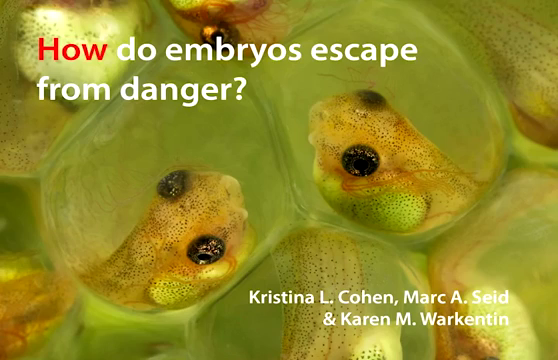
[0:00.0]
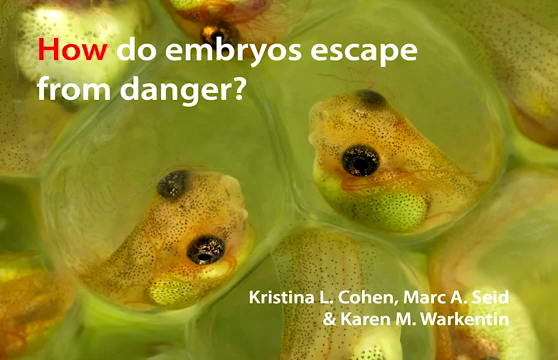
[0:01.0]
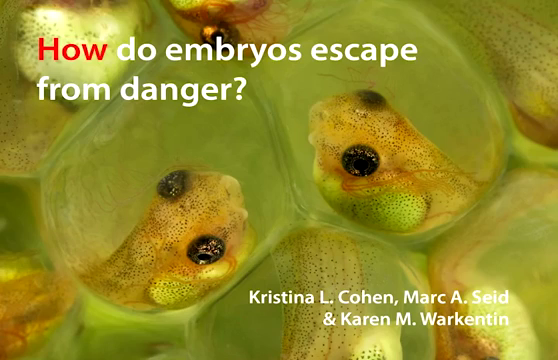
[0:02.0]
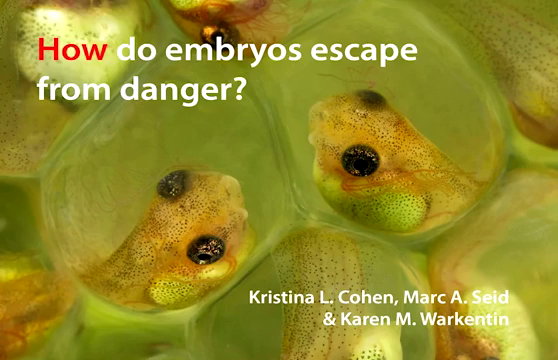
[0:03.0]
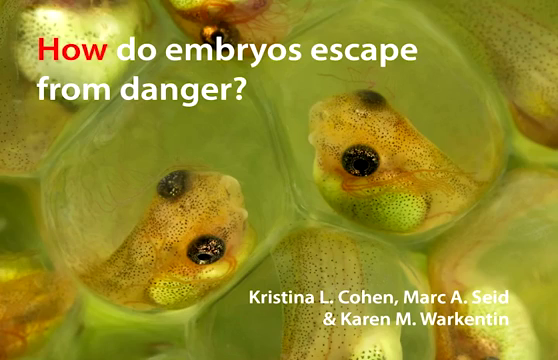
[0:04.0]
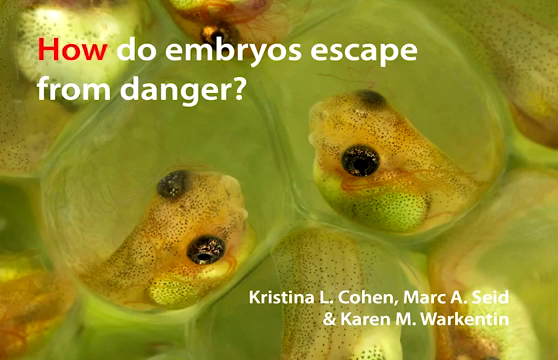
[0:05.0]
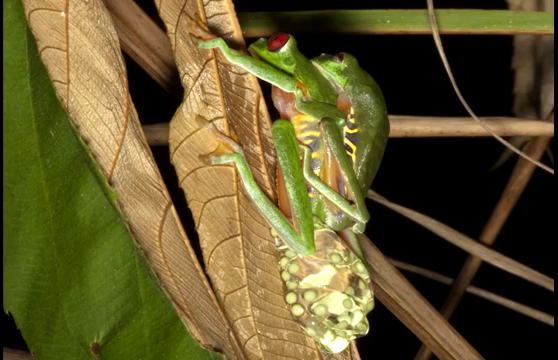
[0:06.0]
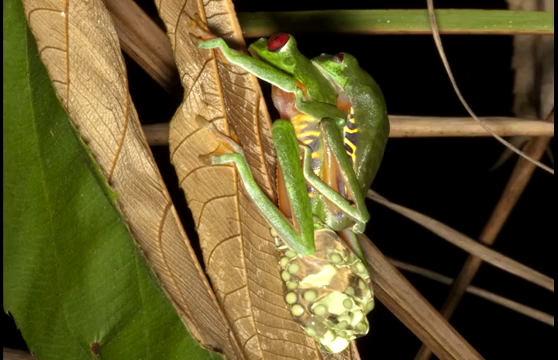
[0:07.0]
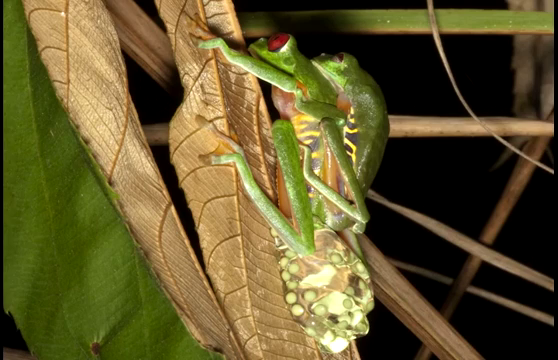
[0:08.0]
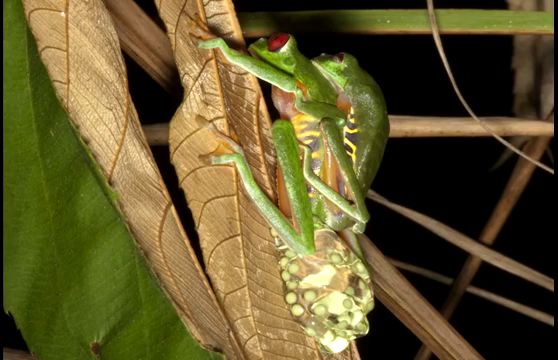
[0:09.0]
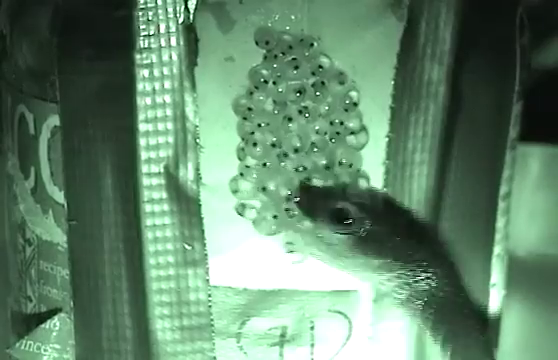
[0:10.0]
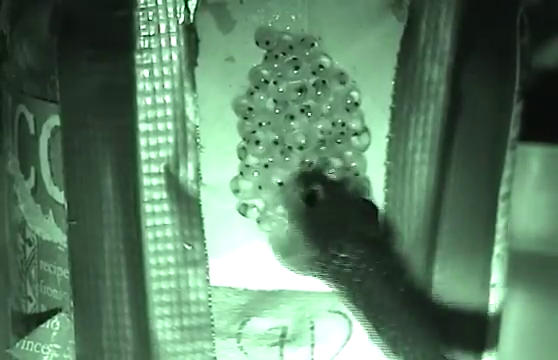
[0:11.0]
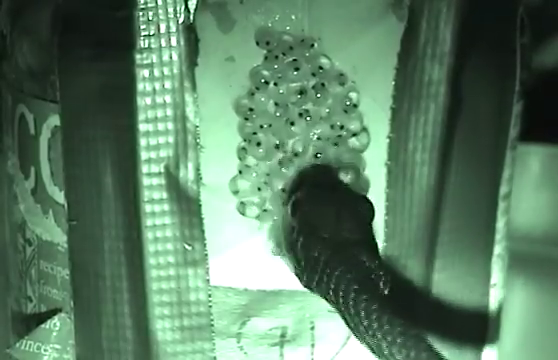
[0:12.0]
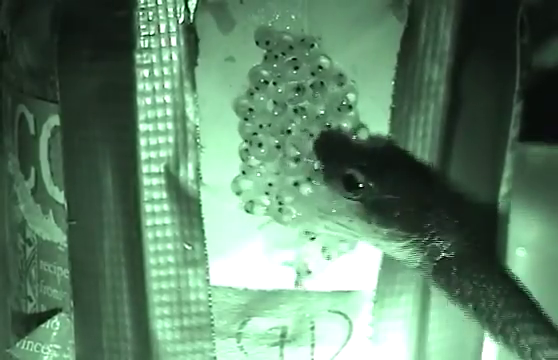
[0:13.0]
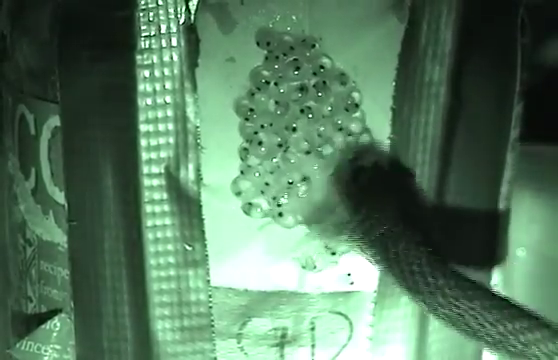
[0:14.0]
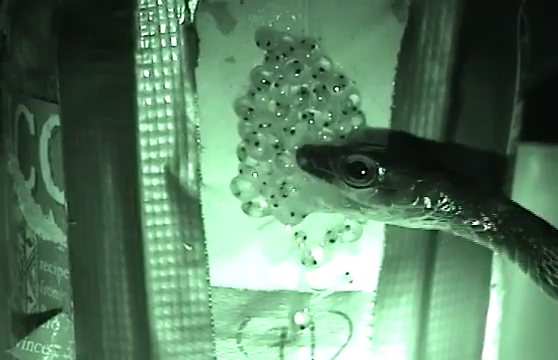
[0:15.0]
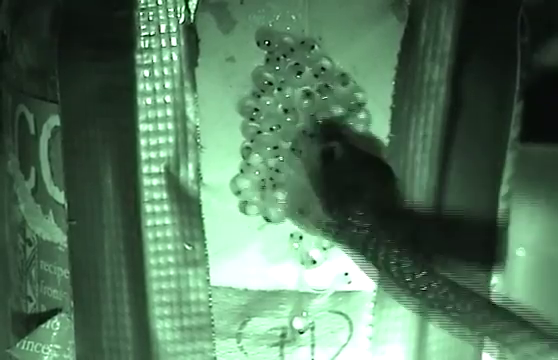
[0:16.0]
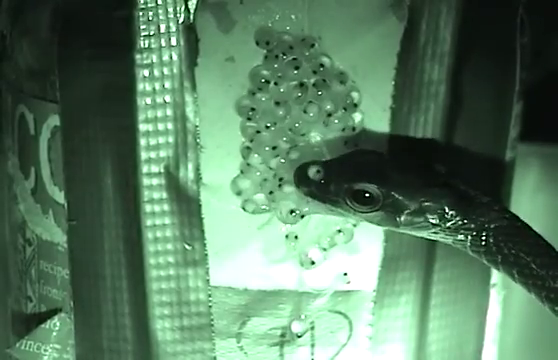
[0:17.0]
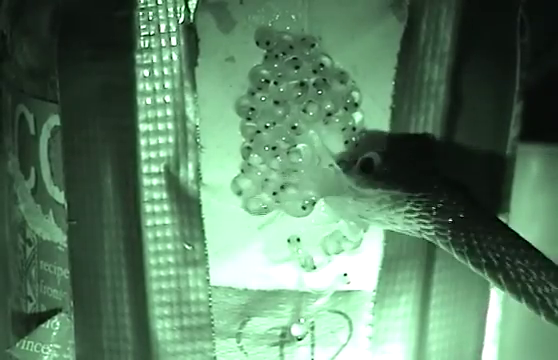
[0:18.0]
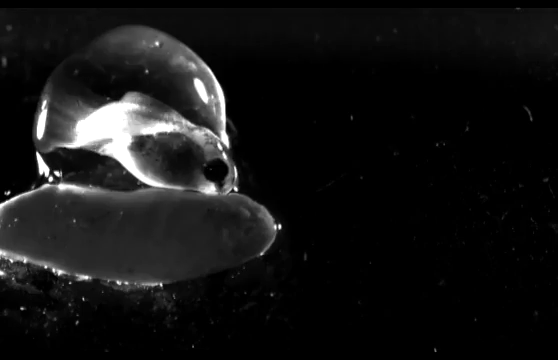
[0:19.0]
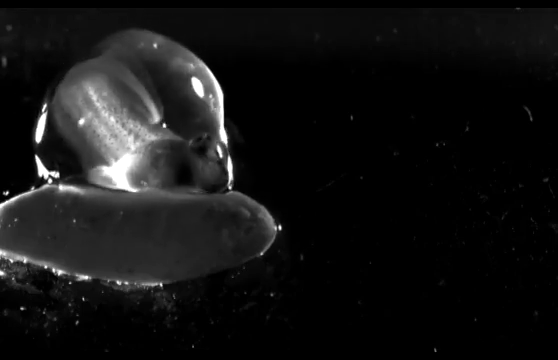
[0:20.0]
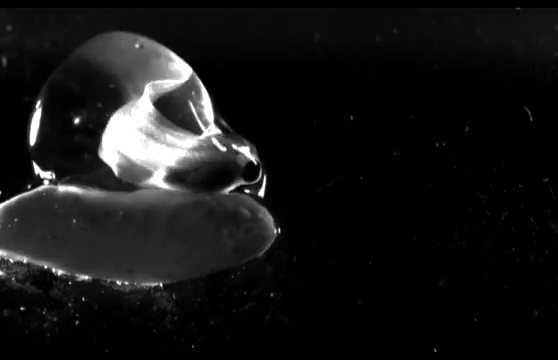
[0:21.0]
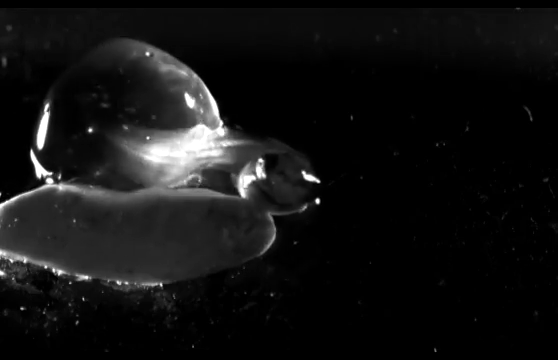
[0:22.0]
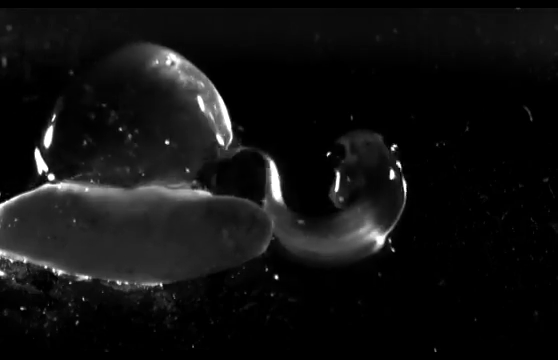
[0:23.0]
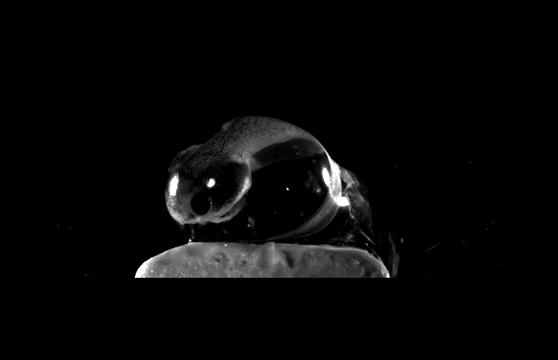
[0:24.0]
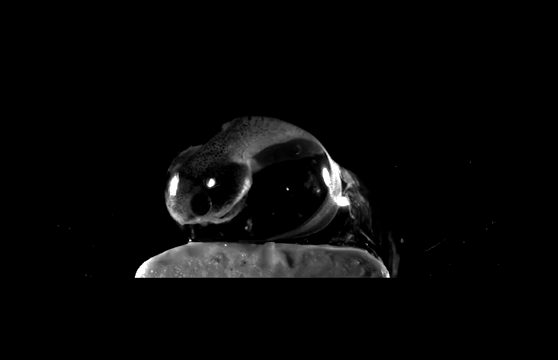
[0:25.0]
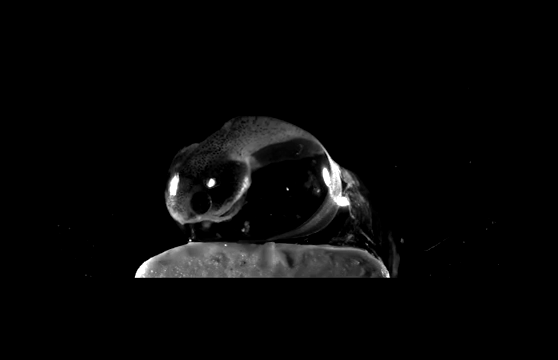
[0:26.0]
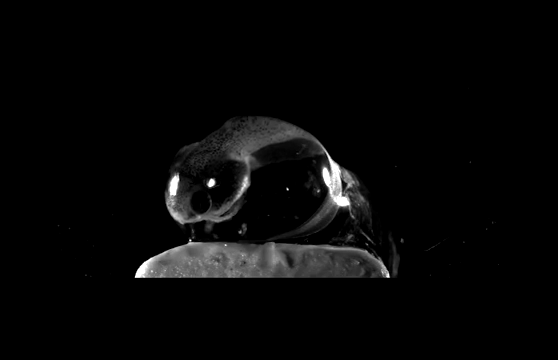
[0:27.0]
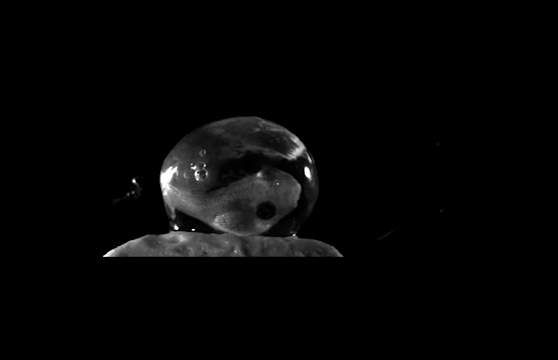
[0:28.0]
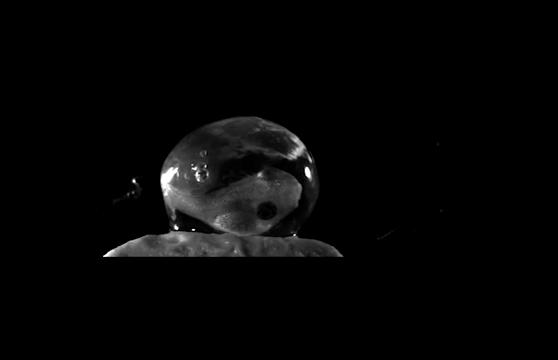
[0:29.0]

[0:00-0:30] The video opens on an image of what looks like two tadpoles in egg sacs that are still attached to each other, with the text "How do embryos escape from danger?" written across the top. This stays on screen for about four seconds before the screen transitions to two green frogs mating on a brown leaf. They lay eggs, and the laid eggs are shown. Next comes a black and white image of what looks like a predator eating the eggs: a snake gobbling up eggs, with only the snake's head visible. A black and white image of an embryo in an egg sac follows; the embryo wriggles and moves its way out of the sac. The embryo is then perched on what looks like a small rock, where it stands still for a while.